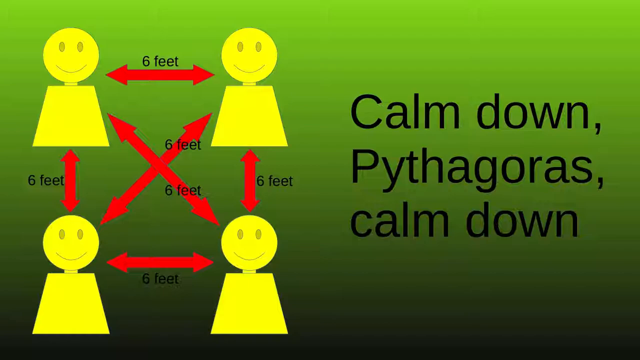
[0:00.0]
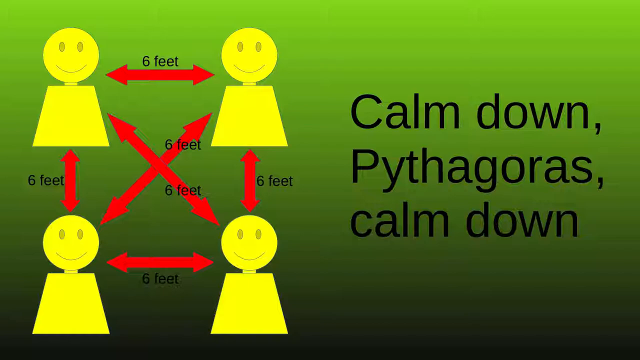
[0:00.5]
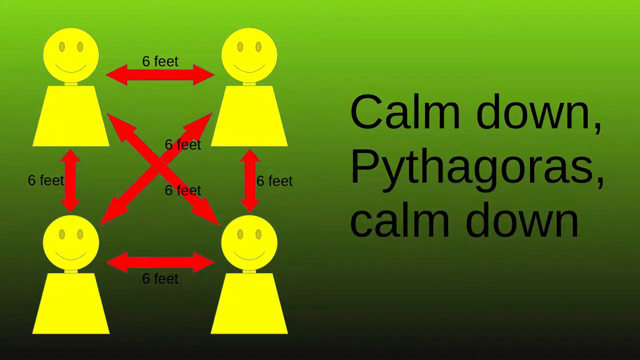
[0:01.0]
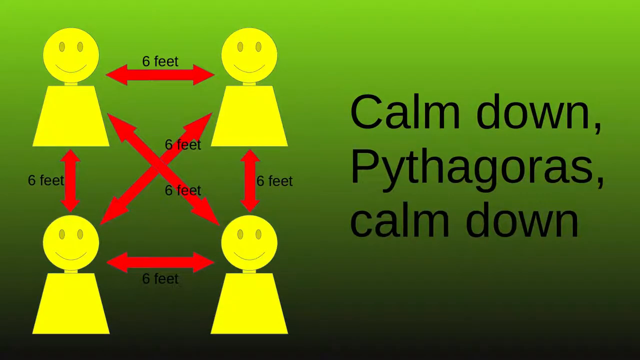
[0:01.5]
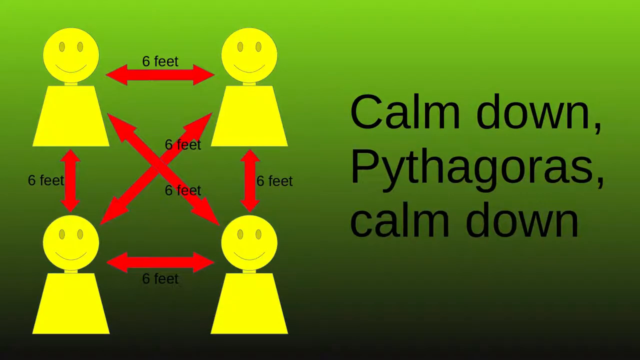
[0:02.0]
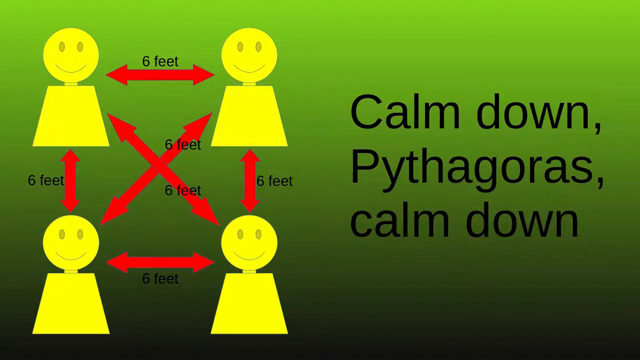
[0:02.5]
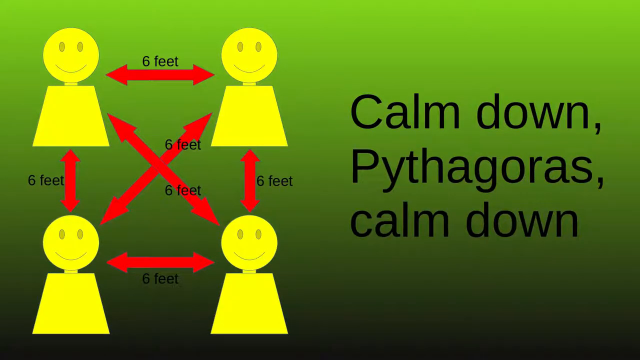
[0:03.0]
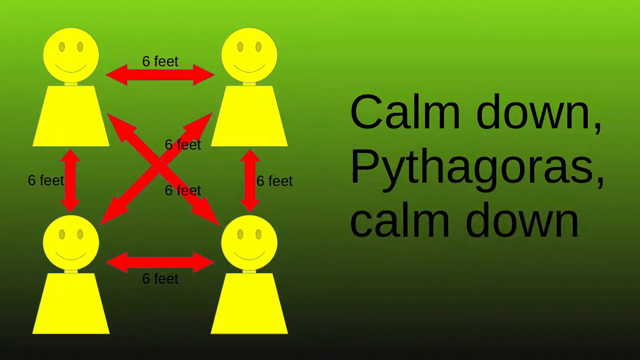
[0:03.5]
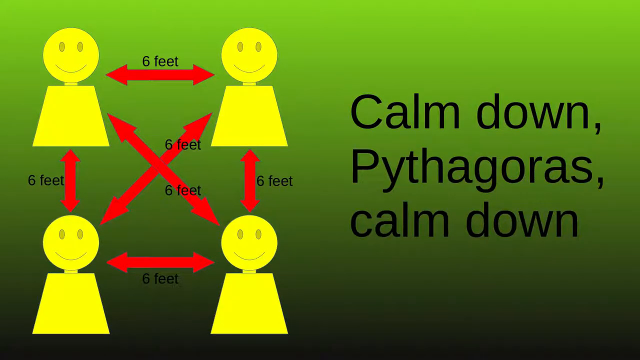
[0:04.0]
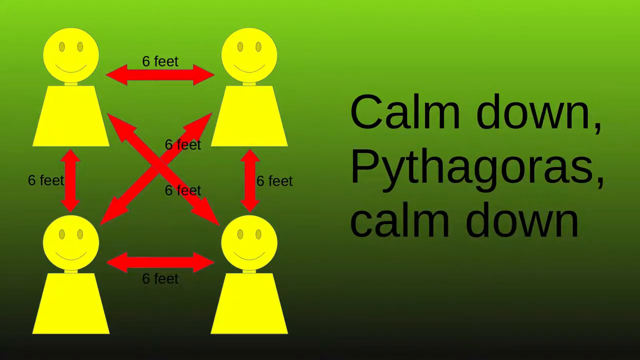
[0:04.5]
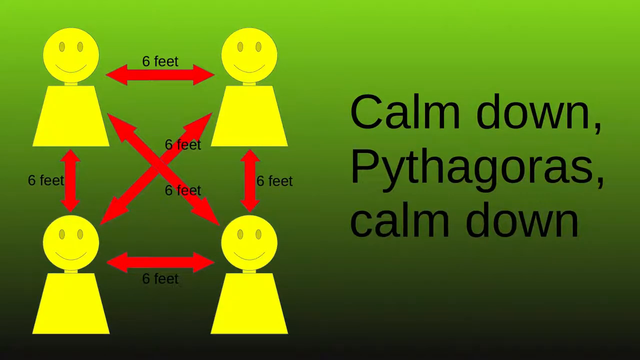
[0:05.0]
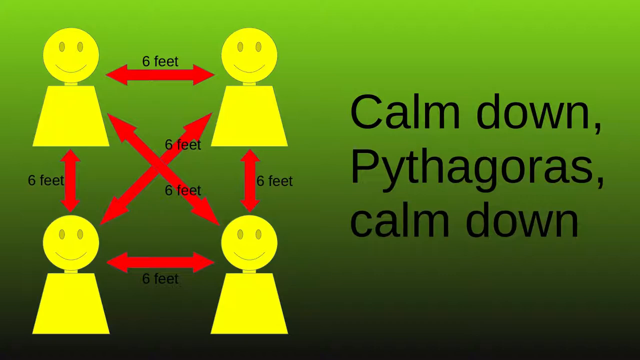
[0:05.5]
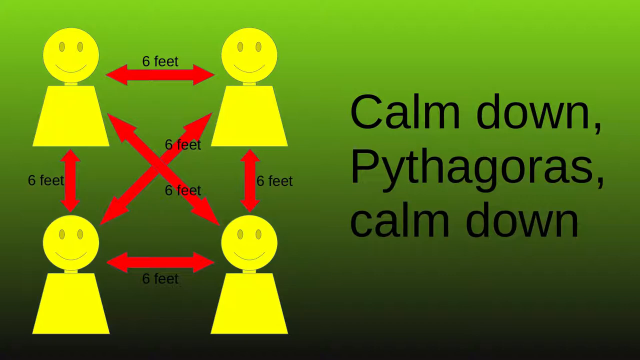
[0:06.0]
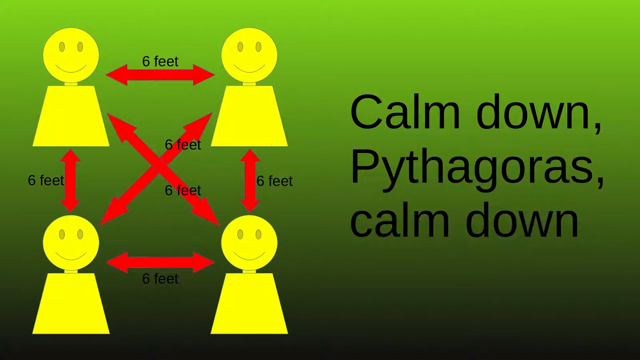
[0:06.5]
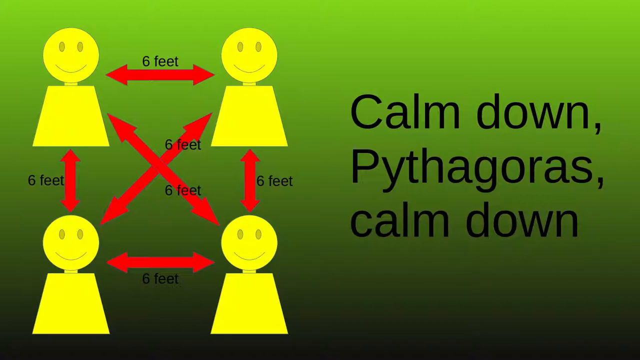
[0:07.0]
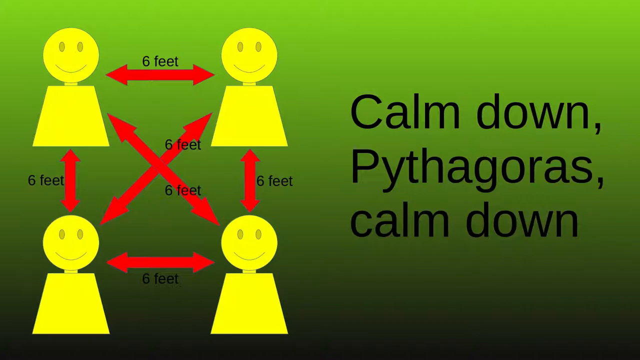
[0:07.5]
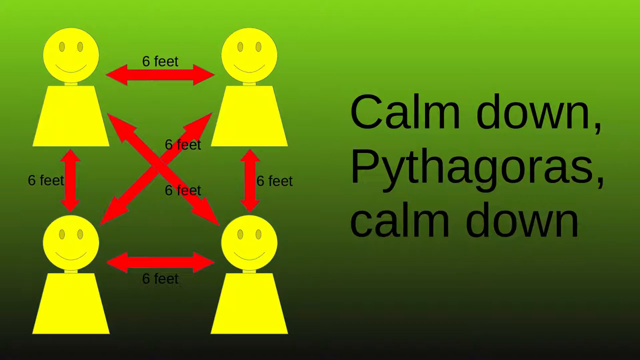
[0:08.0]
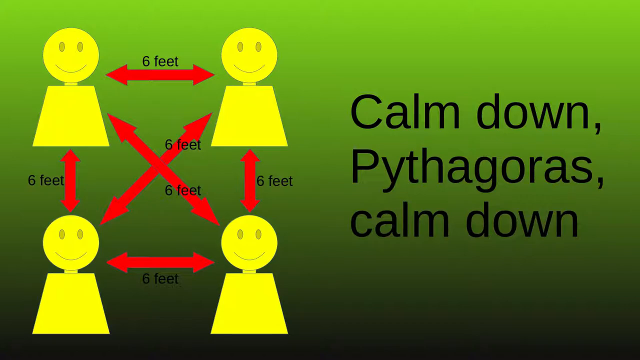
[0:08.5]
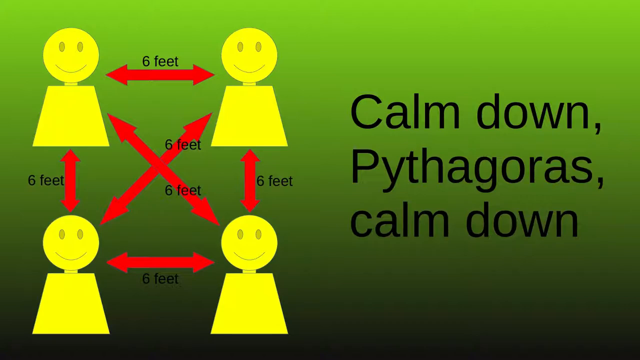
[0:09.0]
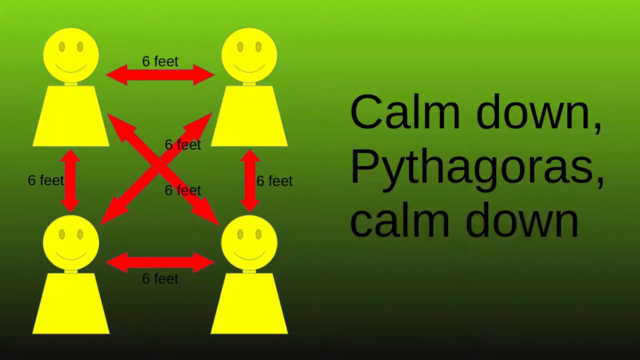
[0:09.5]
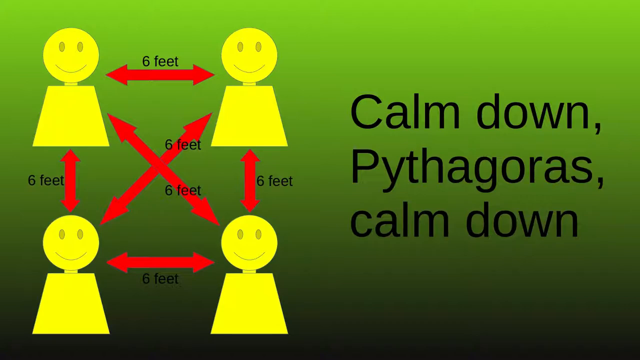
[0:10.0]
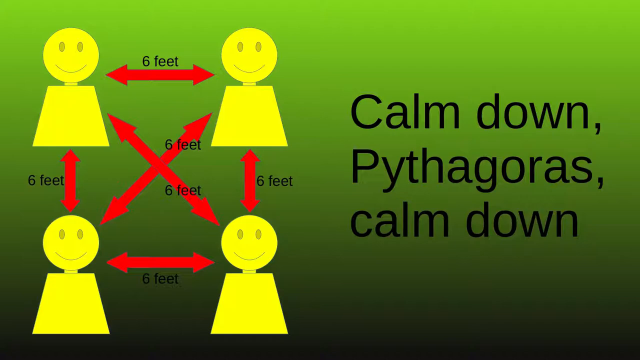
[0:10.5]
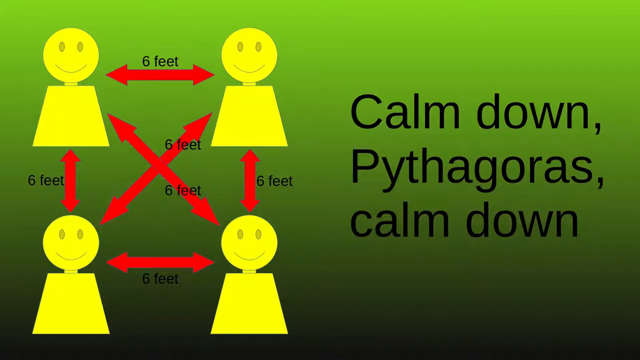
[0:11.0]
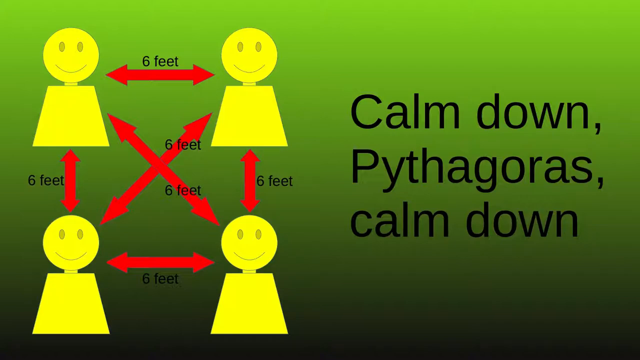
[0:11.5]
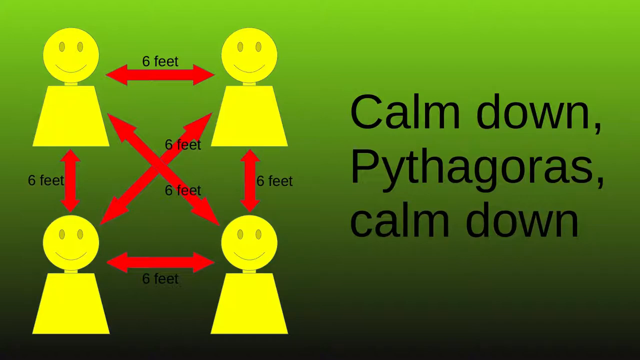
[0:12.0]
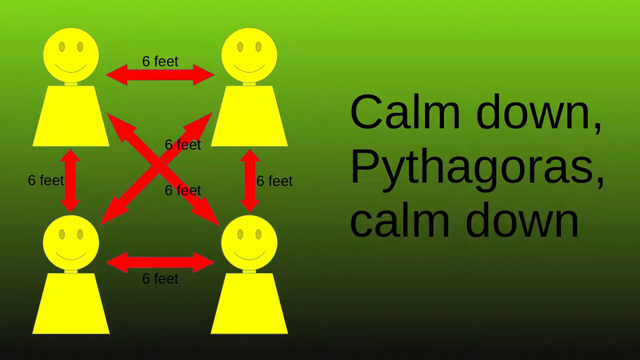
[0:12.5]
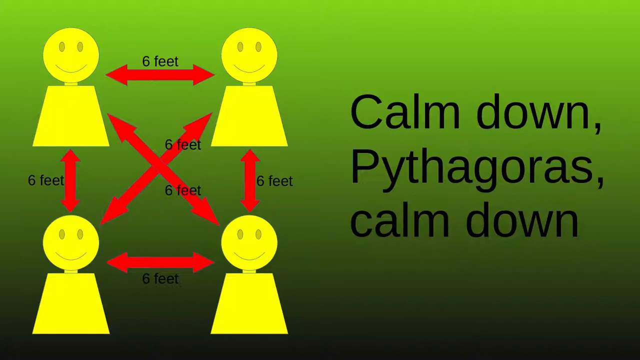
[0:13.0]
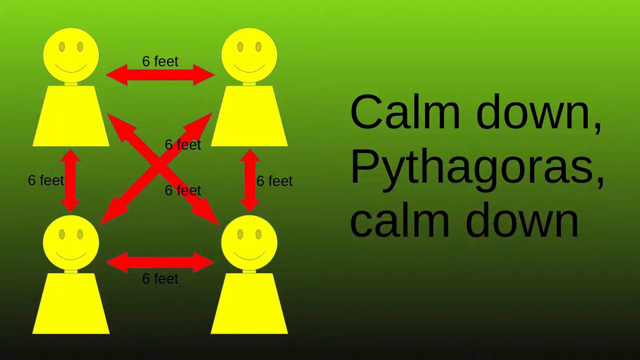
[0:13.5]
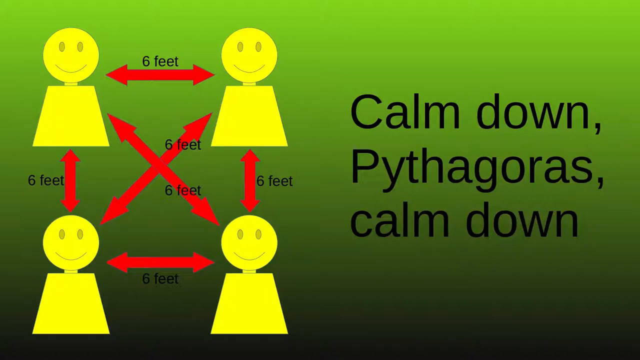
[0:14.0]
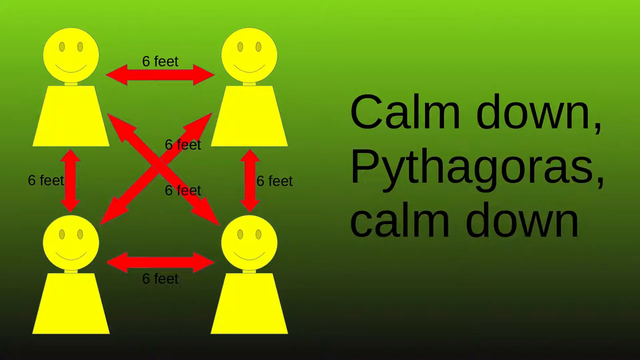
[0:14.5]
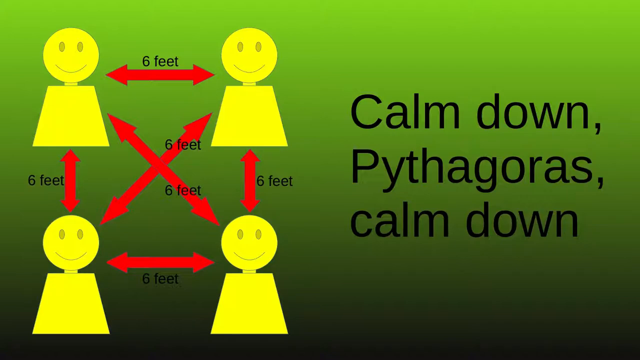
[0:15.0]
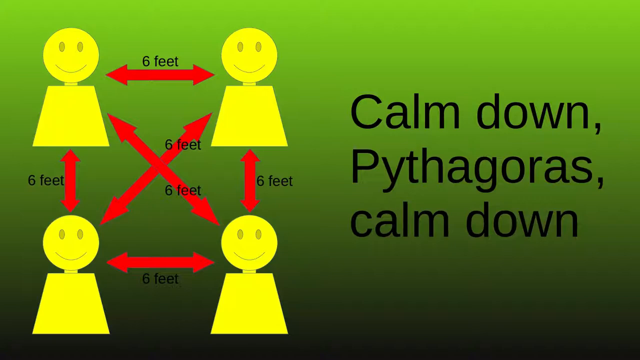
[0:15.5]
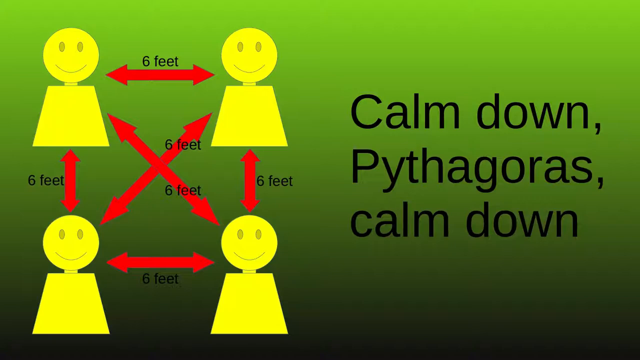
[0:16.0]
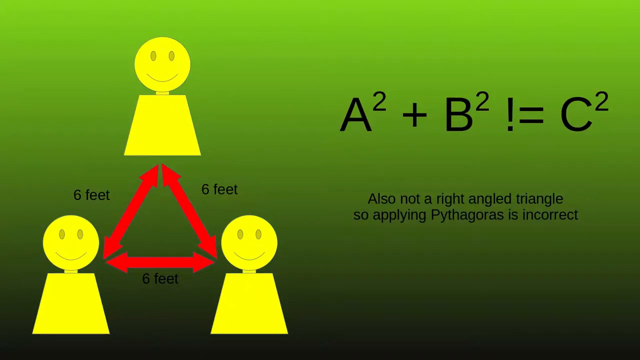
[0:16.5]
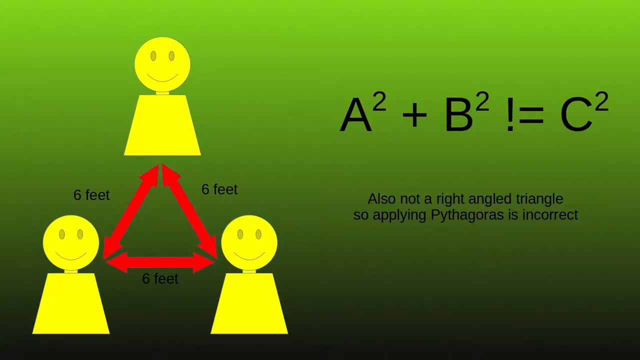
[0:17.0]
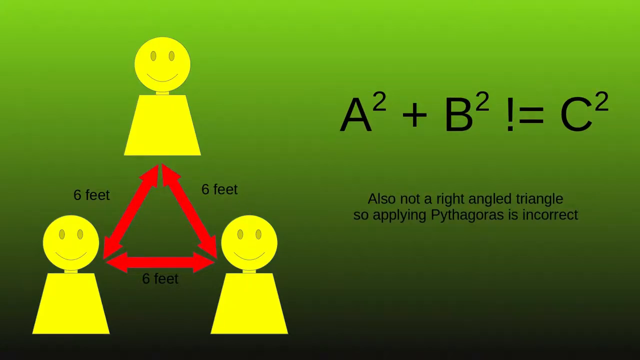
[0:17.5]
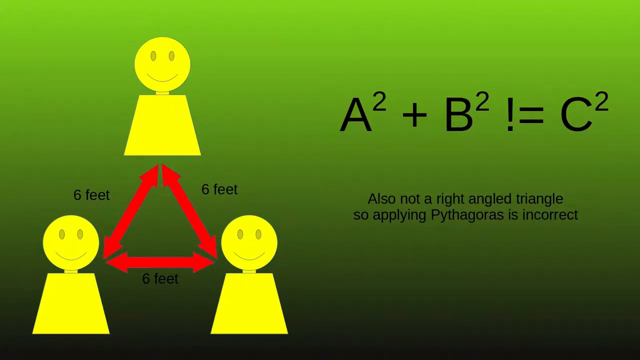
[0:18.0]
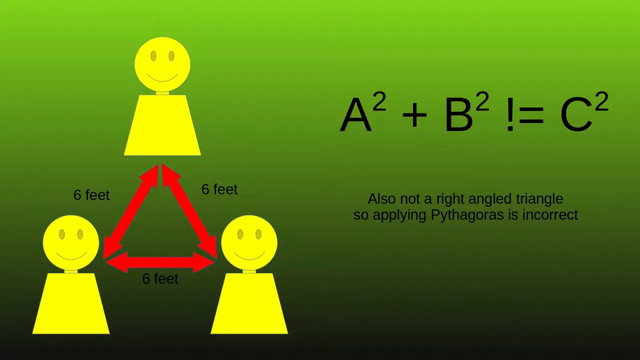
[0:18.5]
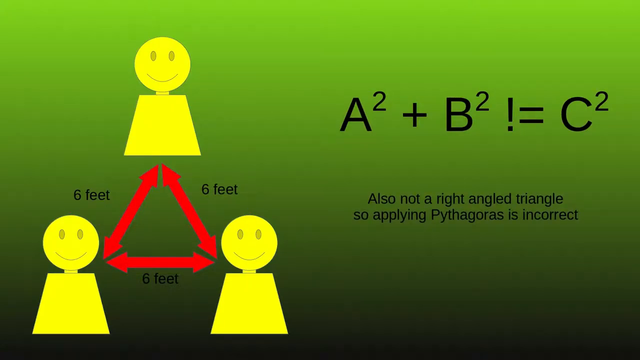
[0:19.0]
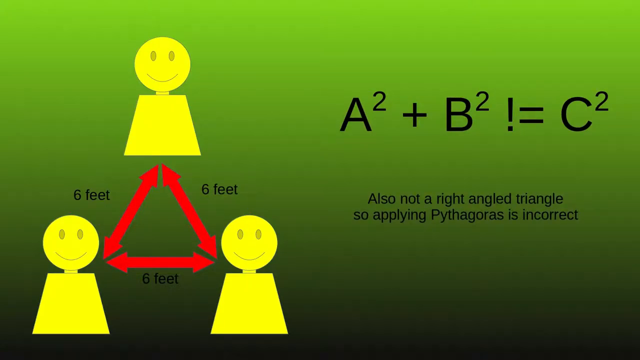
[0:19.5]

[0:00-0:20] Against a green background, black text on the right side reads "calm down, Pythagoras, calm down". On the left is an image of four smiling faces with simple bodies, drawn with only a few lines in simple yellow colours. Arrows between each of the four faces indicate that they are all six feet apart, six feet between each as well as six feet diagonally. This stays on screen for a short time before changing to a new screen, still with the green background, that shows only three of the same people. All three are labeled as being six feet away from each other. It states that A-squared + B-squared does not equal C-squared, and black text explains that since this is also not a right-angled triangle, applying Pythagoras is incorrect in the example shown.